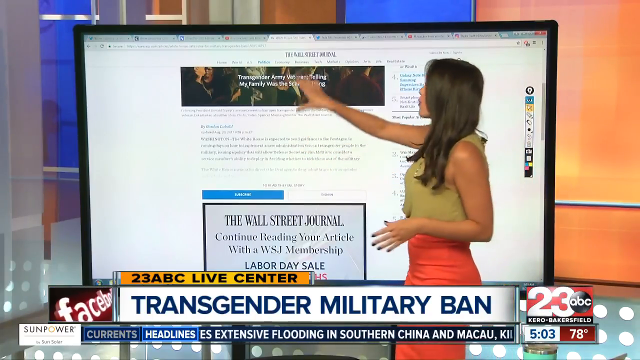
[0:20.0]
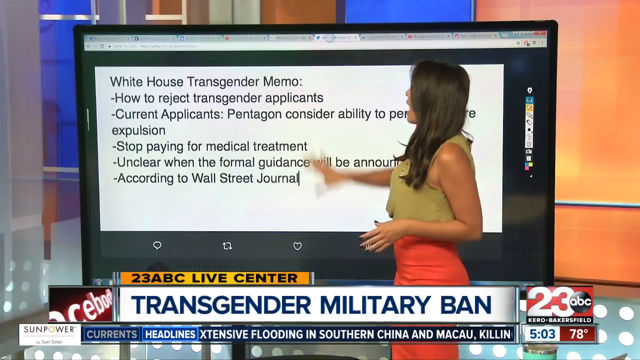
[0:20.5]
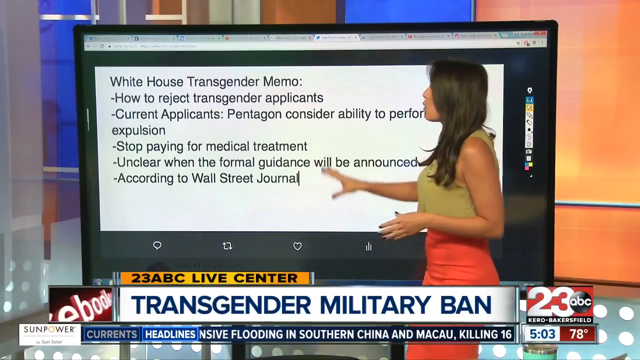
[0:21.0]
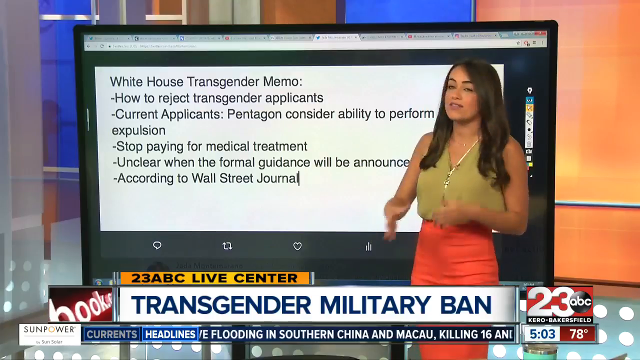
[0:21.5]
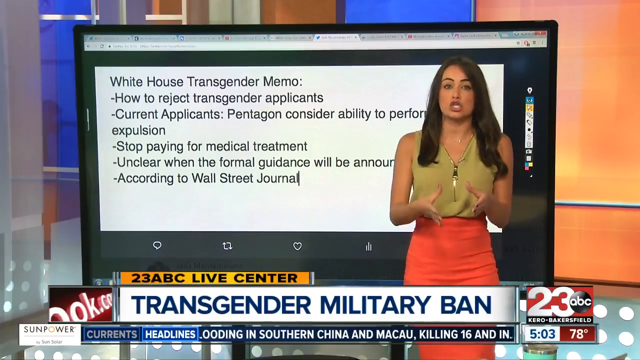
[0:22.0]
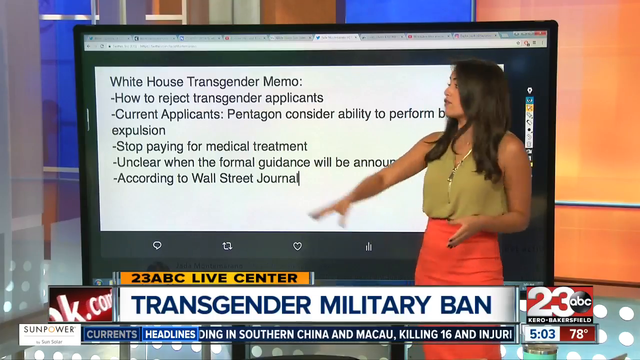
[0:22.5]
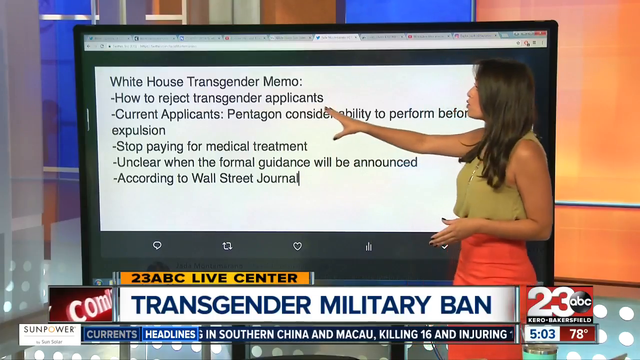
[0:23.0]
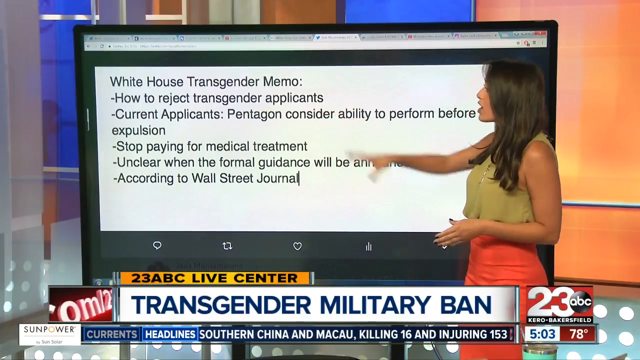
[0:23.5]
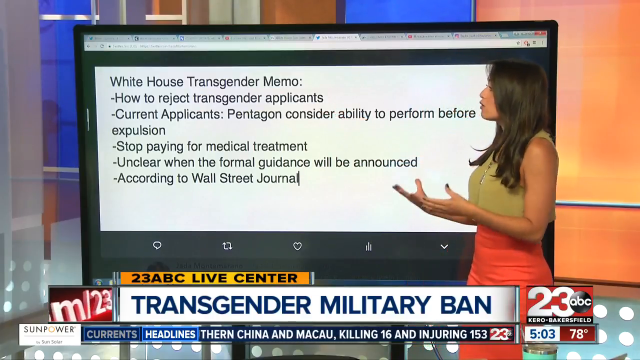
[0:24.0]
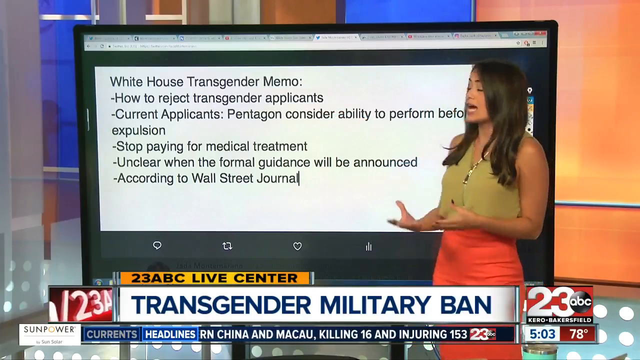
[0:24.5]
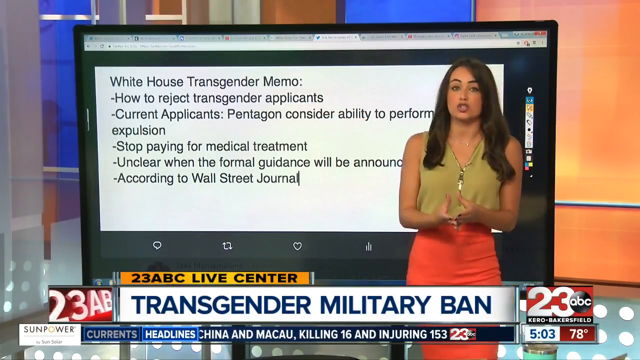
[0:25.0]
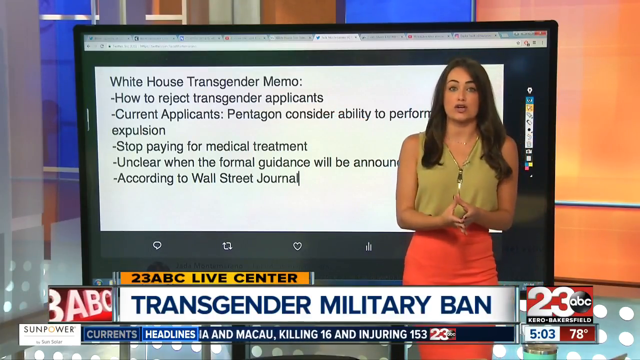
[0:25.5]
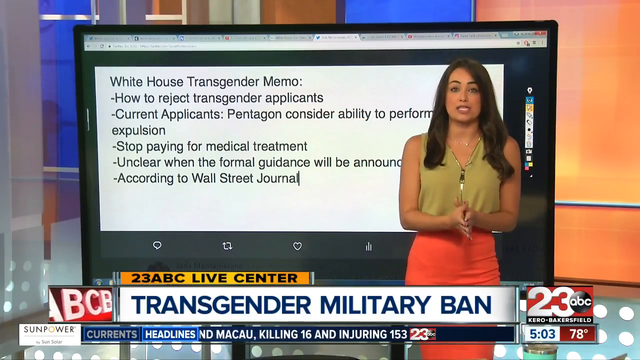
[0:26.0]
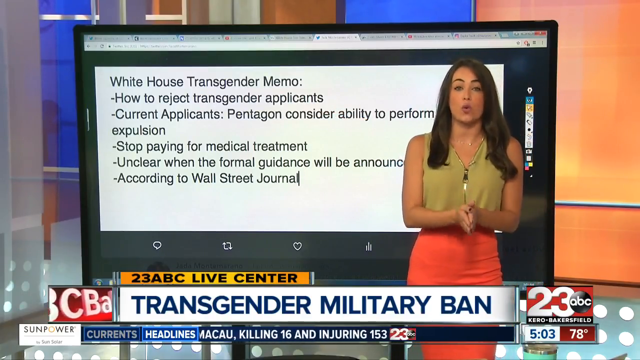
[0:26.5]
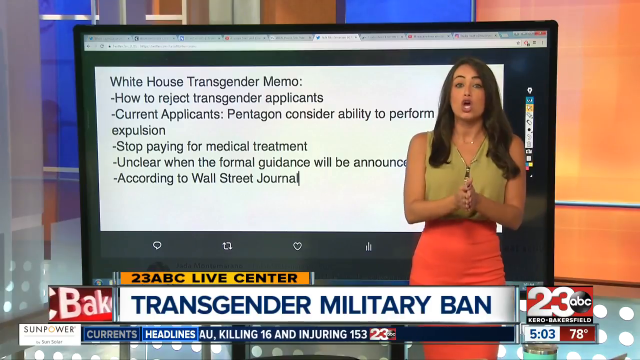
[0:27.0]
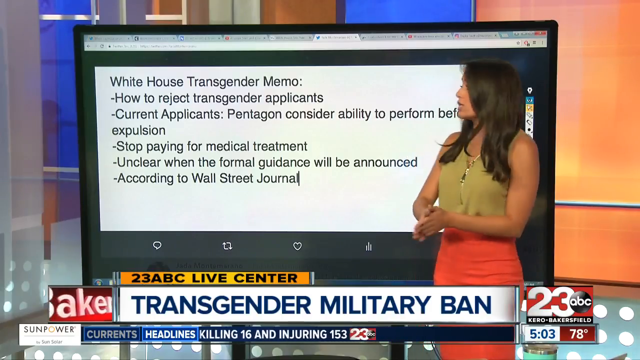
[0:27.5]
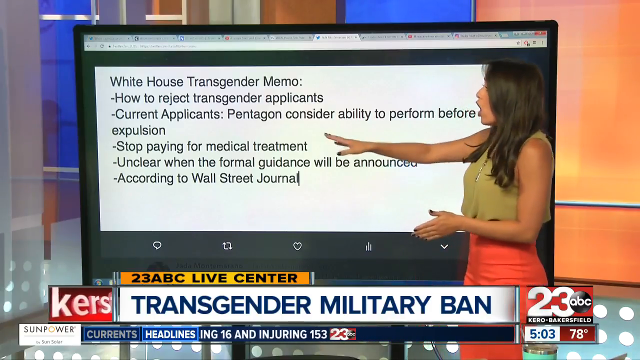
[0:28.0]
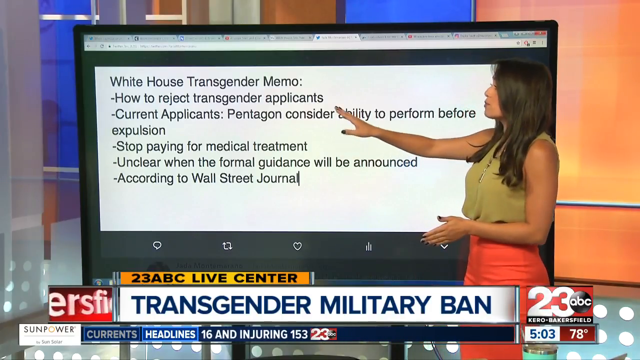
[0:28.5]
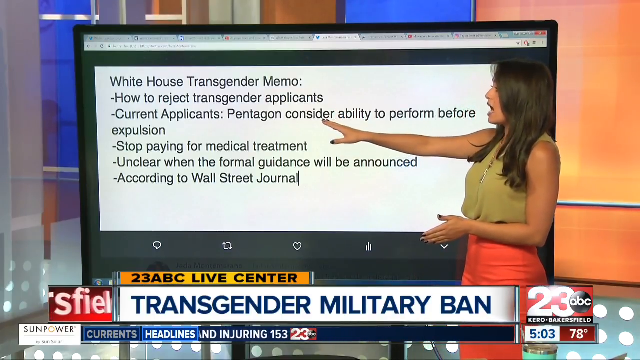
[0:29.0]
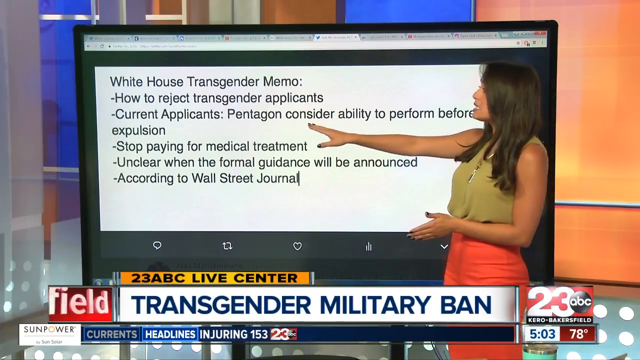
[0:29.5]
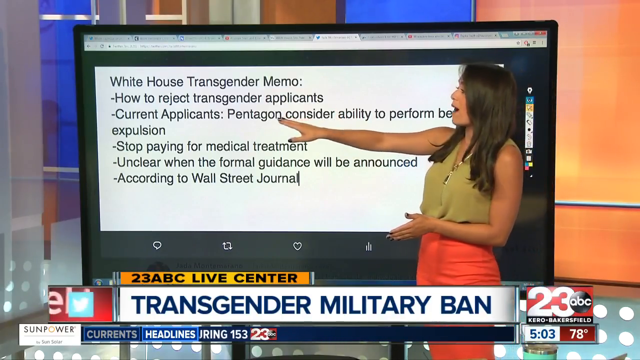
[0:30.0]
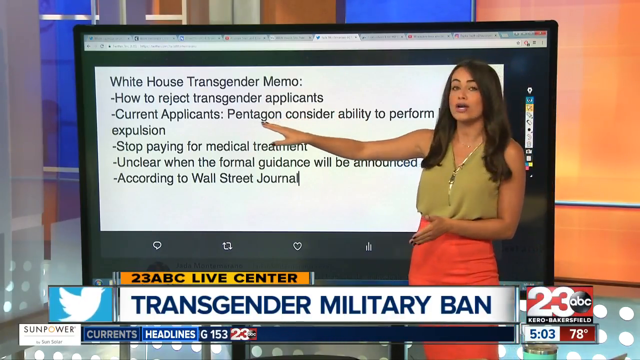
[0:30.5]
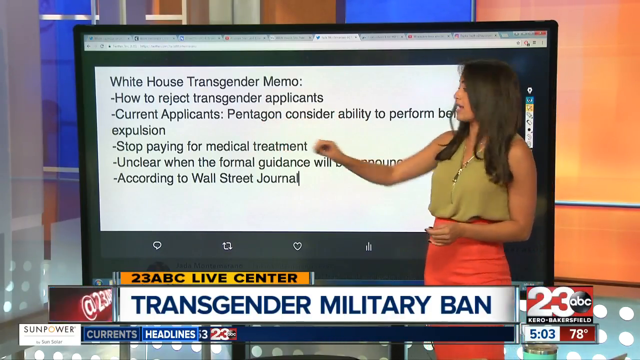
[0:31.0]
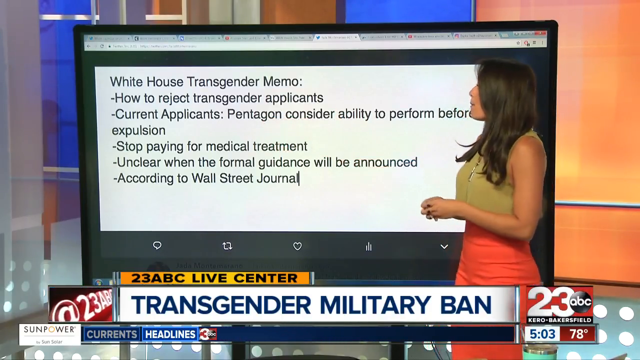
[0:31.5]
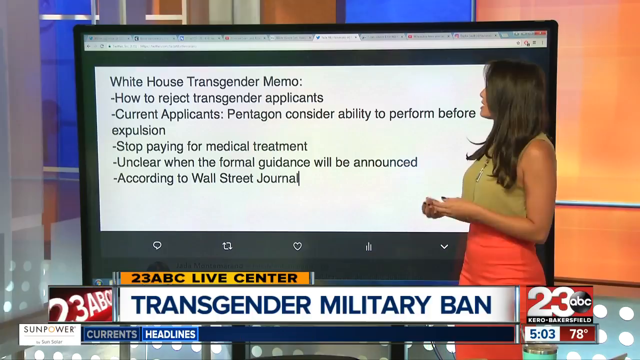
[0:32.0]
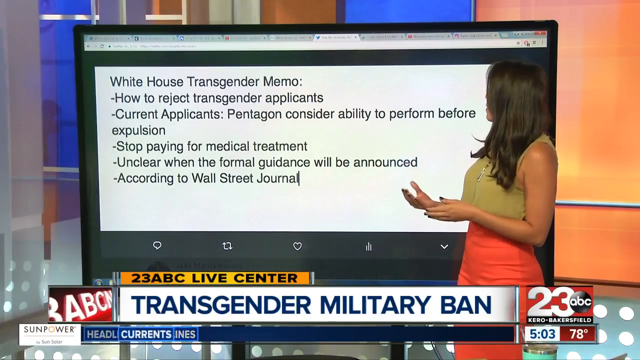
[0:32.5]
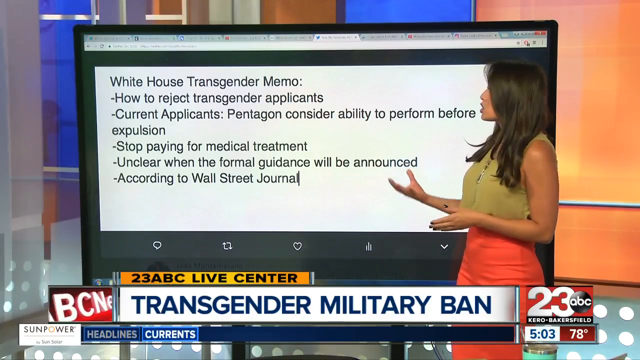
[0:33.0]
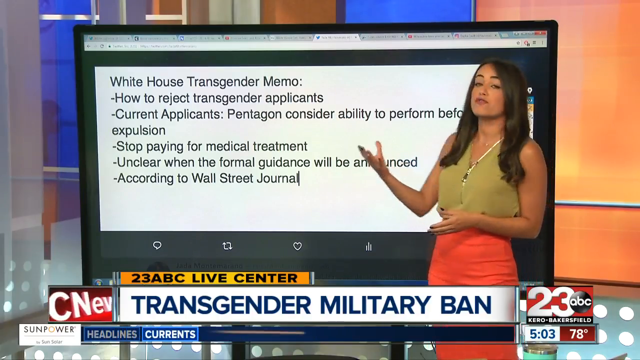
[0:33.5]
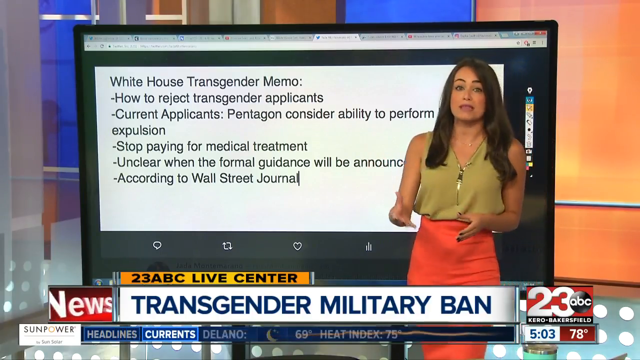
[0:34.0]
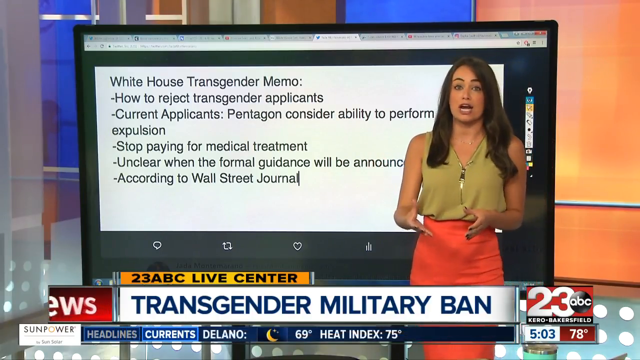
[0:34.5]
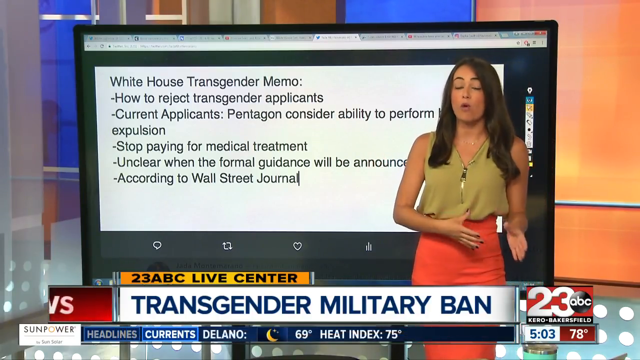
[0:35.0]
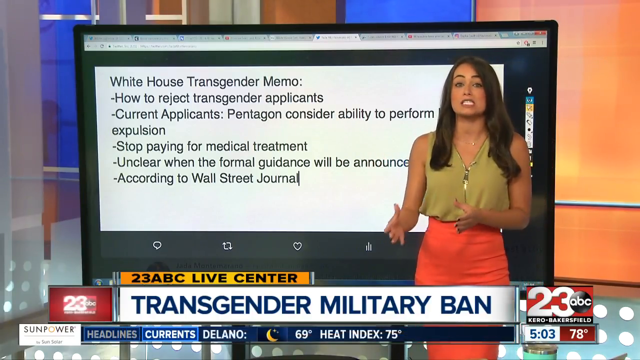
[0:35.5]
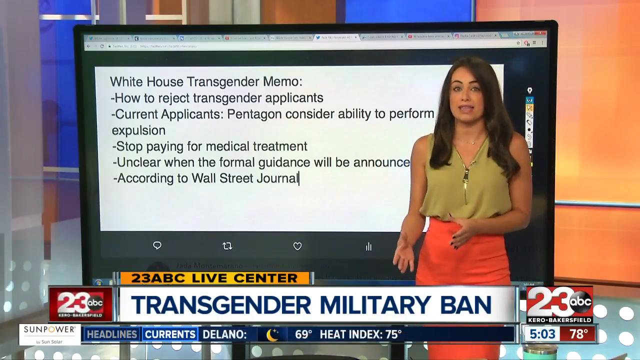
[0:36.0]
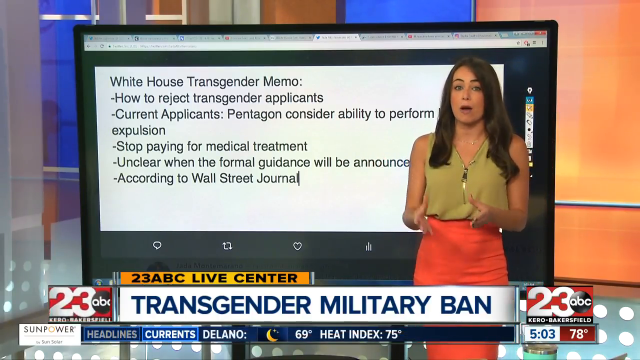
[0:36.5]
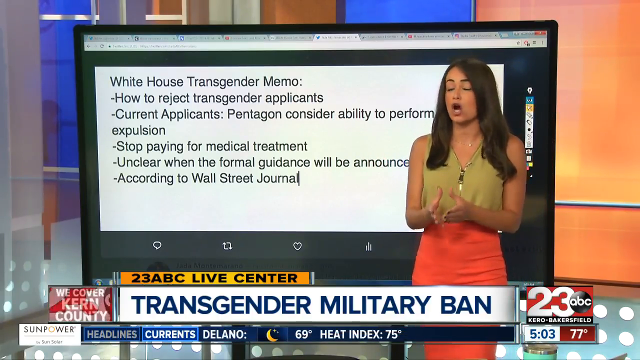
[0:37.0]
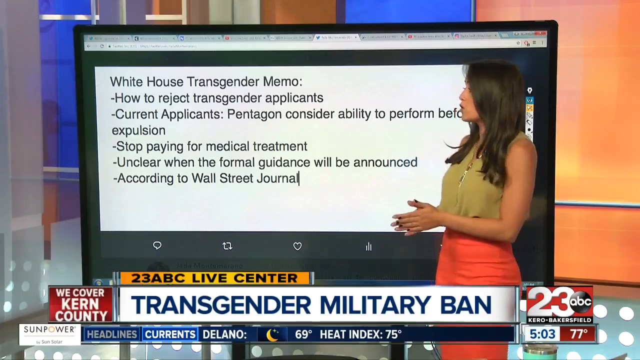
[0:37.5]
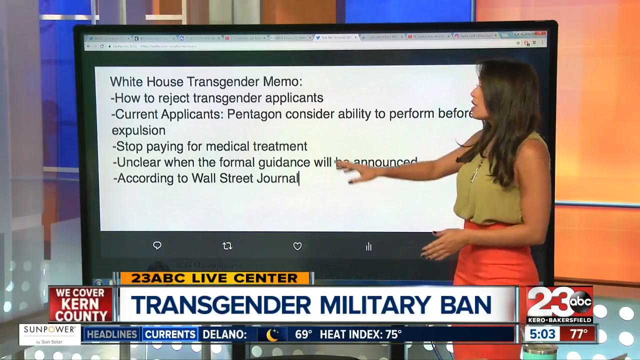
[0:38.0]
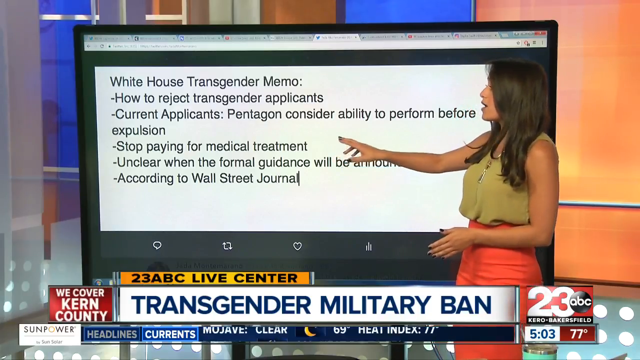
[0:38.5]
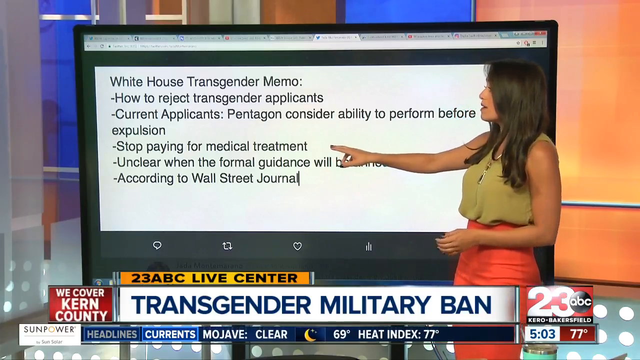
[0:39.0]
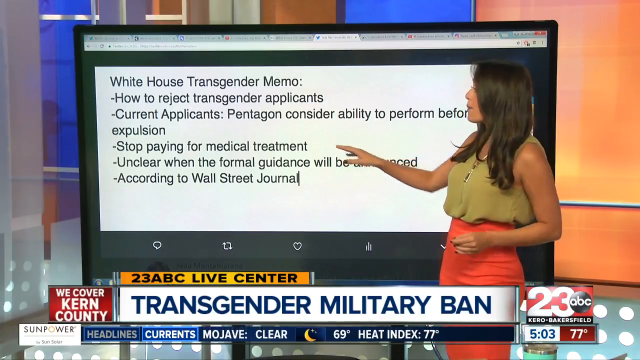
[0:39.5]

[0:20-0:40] The presenter is still in the studio, scrolling through her screen. A report on the screen reads "White House transgender memo" and "how to reject transgender applicants," mentions the Pentagon and expulsion, says "stop paying for medical treatments," and states "unclear when the formal guidance will be announced according to the Wall Street Journal." The report concerns the ban on transgender people joining the military in the United States, and Jada continues explaining the issue.